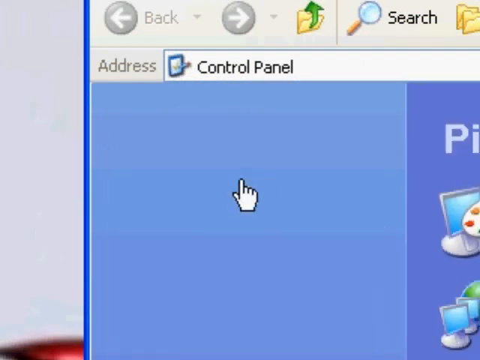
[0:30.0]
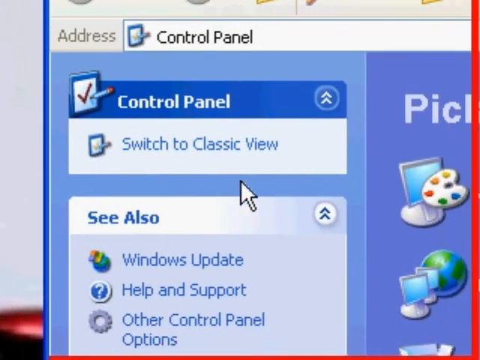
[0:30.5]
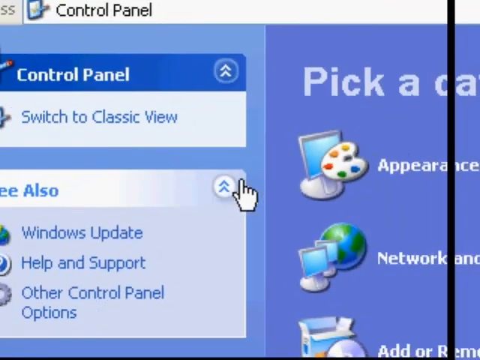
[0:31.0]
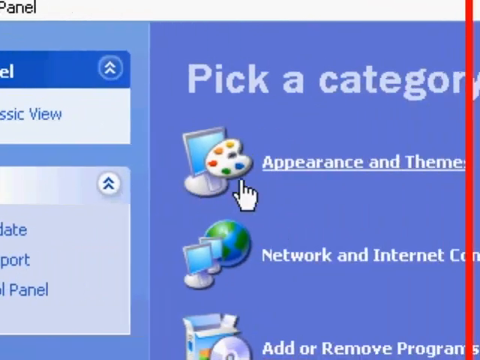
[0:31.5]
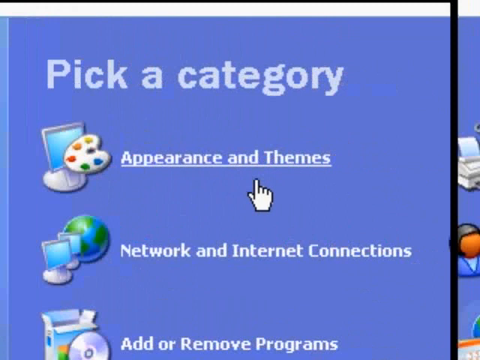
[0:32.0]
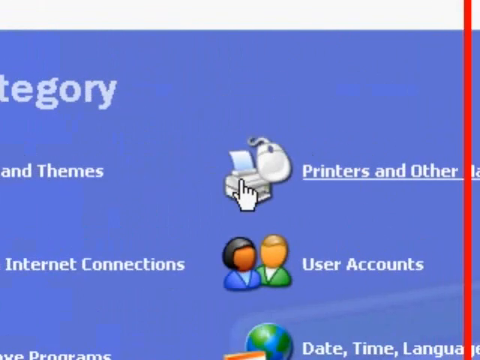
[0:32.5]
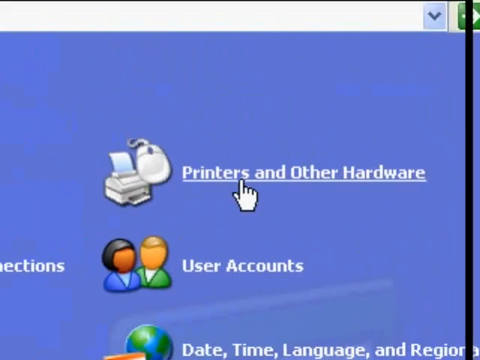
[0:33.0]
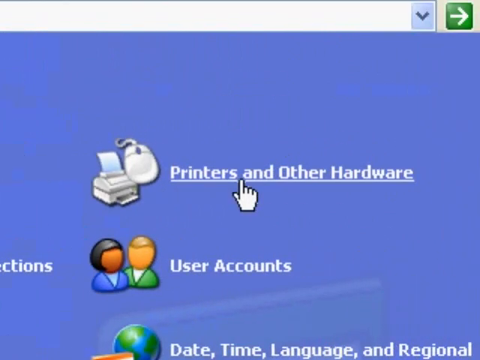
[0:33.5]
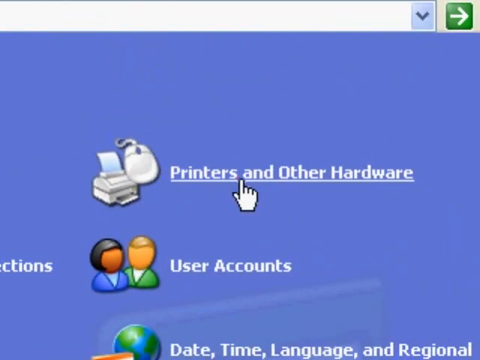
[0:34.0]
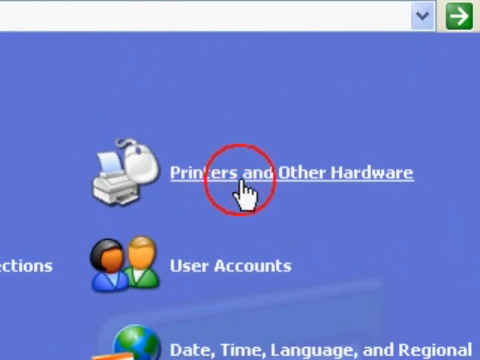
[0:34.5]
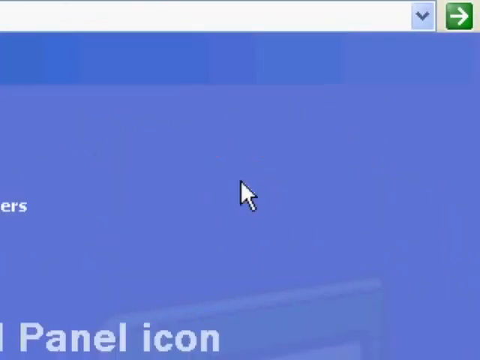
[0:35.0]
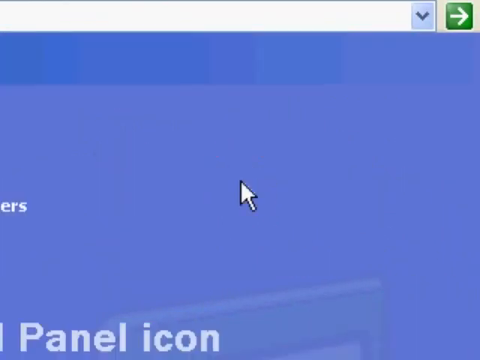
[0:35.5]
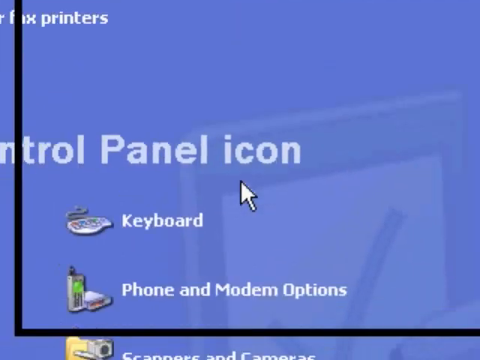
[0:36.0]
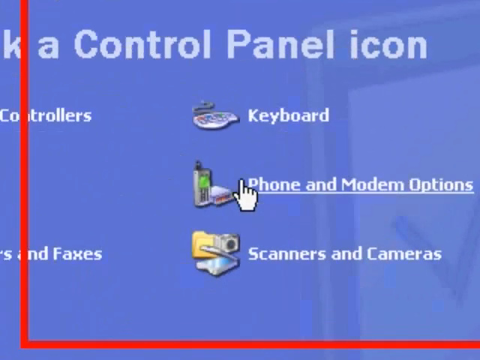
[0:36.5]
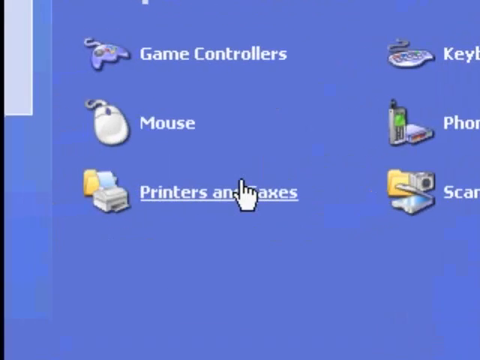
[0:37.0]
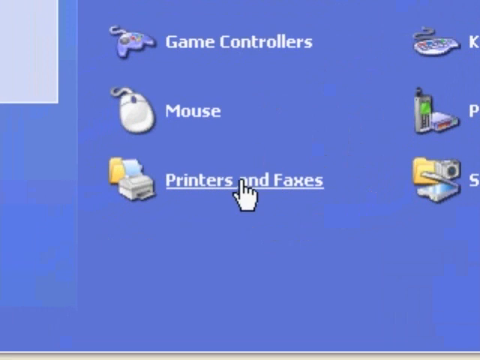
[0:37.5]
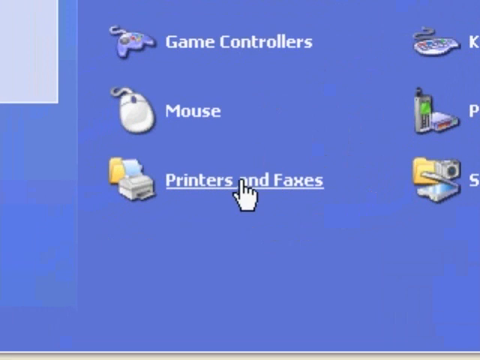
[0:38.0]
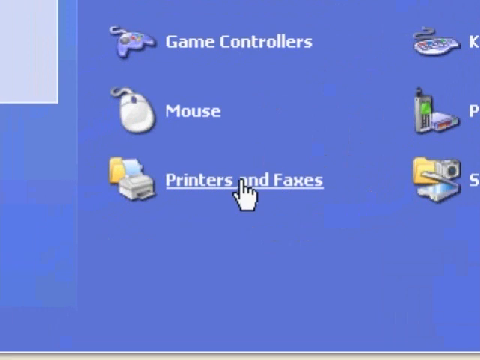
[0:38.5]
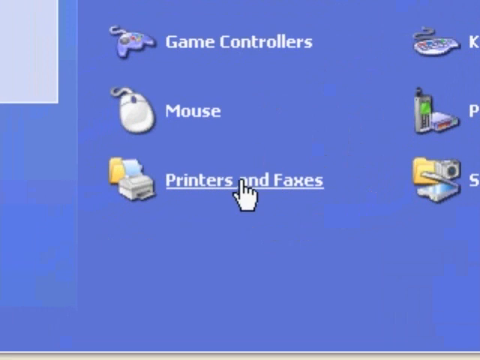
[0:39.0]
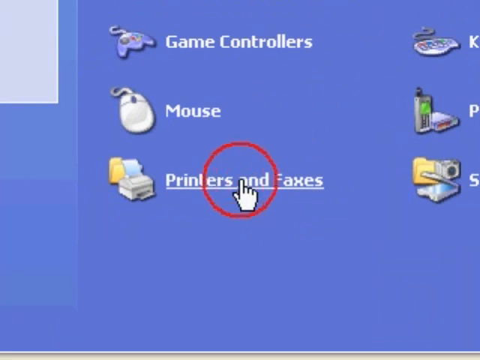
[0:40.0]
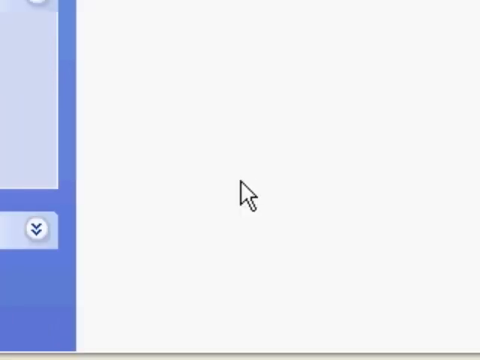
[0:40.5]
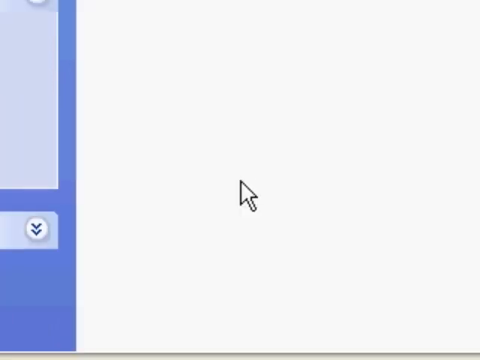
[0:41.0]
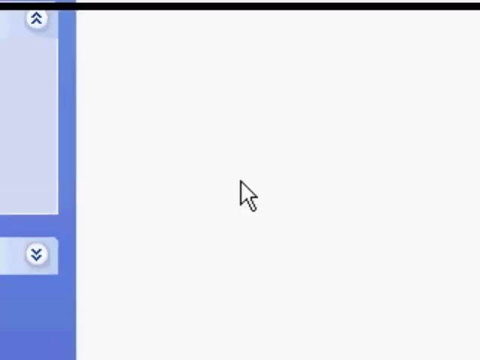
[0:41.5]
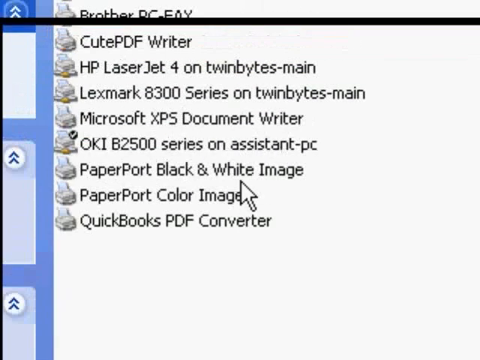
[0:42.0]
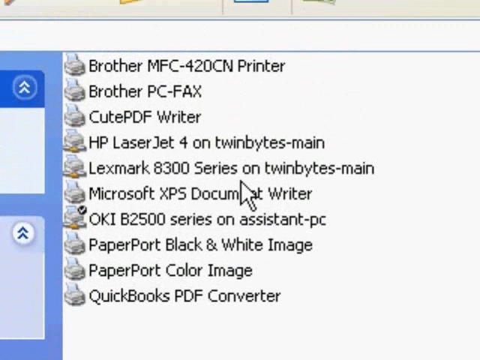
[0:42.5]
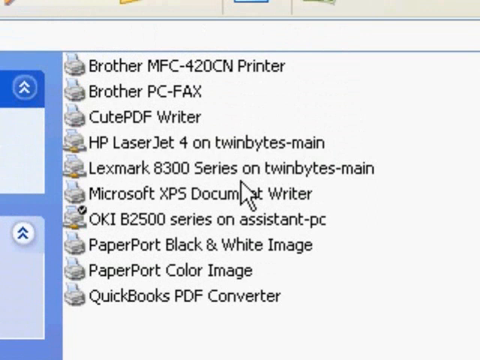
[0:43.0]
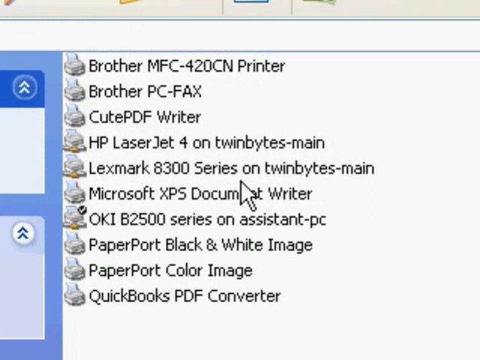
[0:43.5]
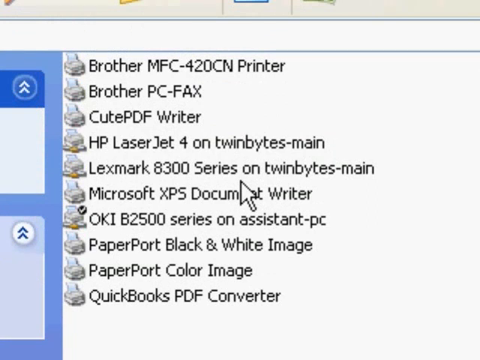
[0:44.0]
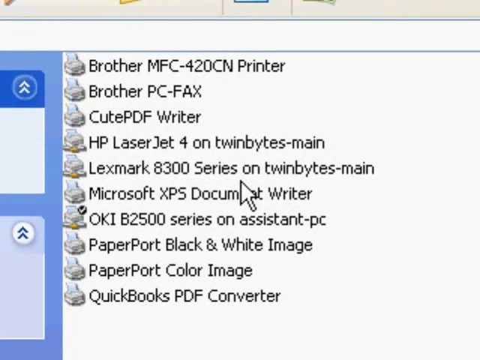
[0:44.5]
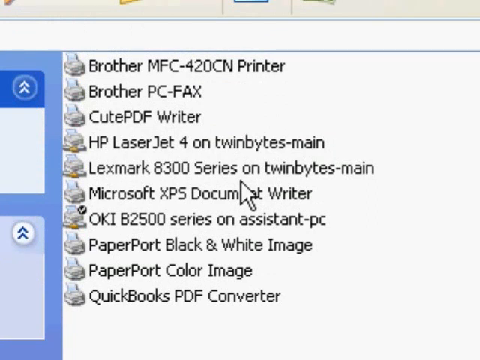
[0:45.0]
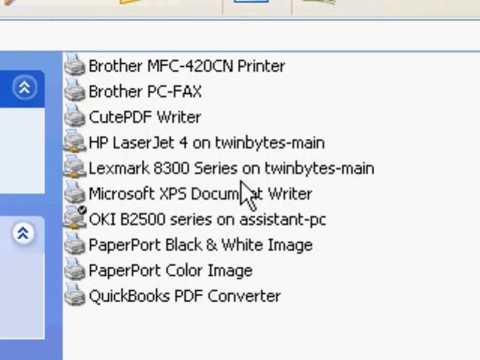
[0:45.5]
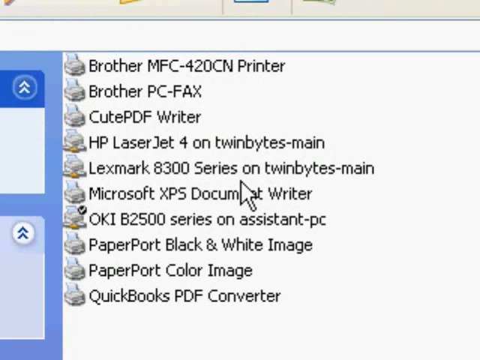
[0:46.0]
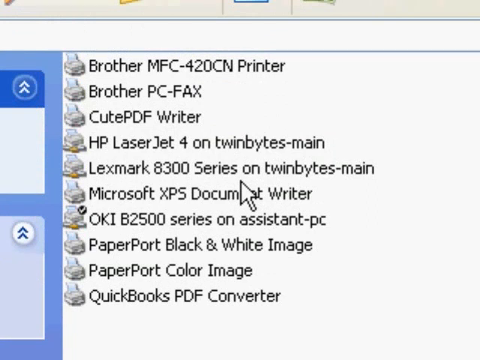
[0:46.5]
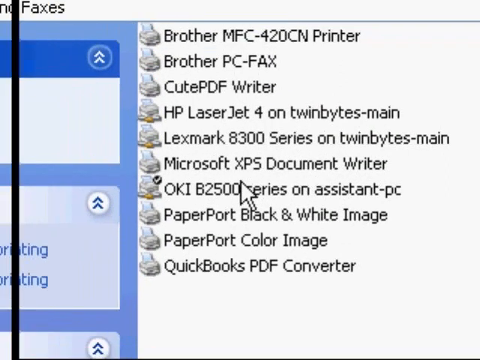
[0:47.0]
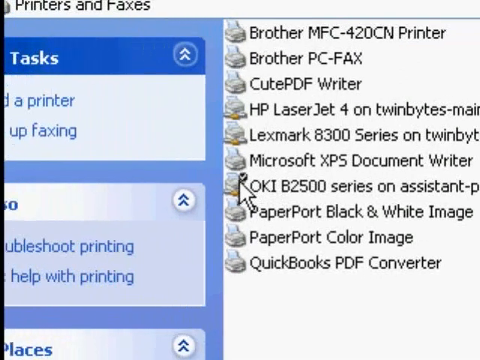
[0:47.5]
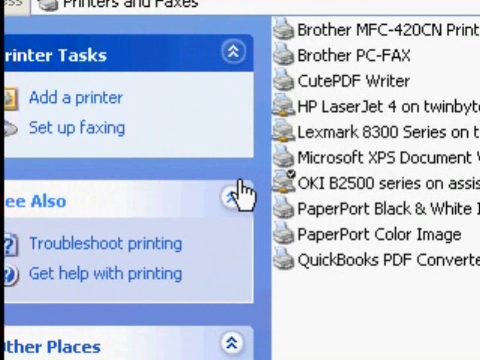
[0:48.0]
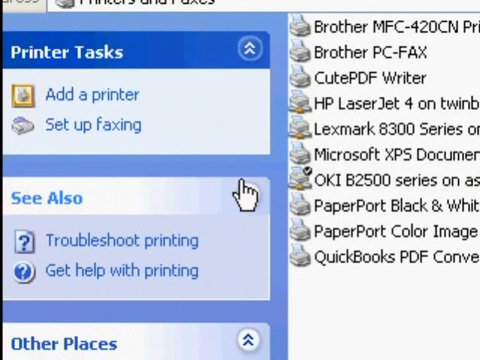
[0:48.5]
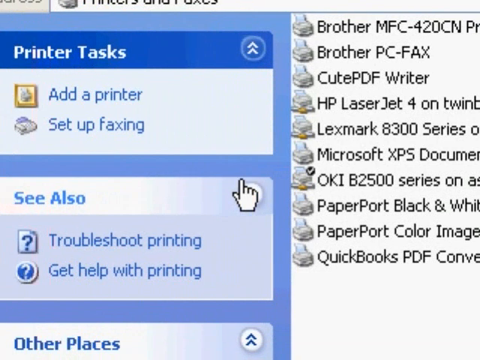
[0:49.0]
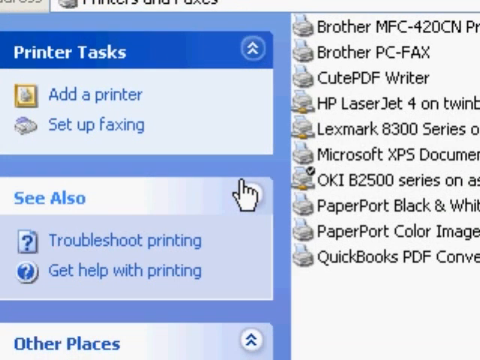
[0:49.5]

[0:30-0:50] A close-up of a Windows PC monitor shows control panel at the top of the page and a cursor, shaped like a hand, in the middle. The cursor moves over to the right, where user accounts and printers and other hardware are visible. It clicks on printers and other hardware, which leads to another section of the page with an icon for printers and faxes. The cursor clicks that icon, and a list of printers opens: Microsoft XPS Document Writer, Paper port black and white image, Paper port color image, and QuickBooks PDF Converter. The cursor then moves over to the left.